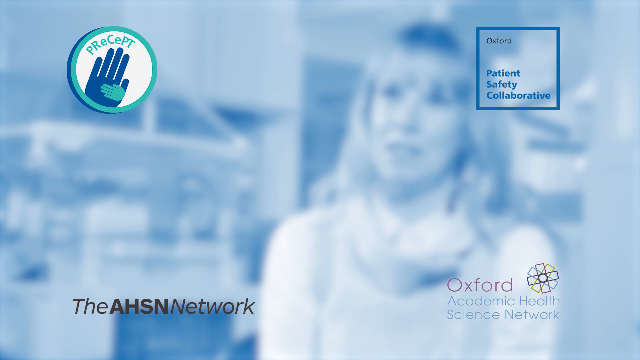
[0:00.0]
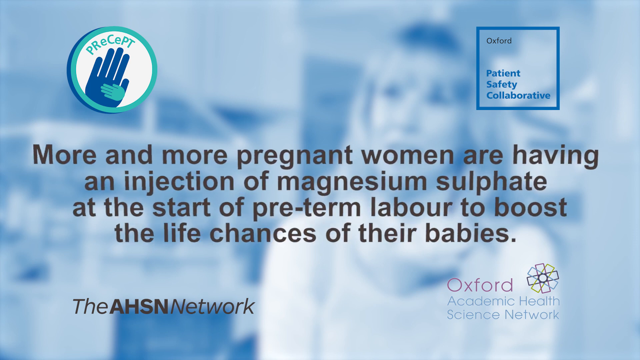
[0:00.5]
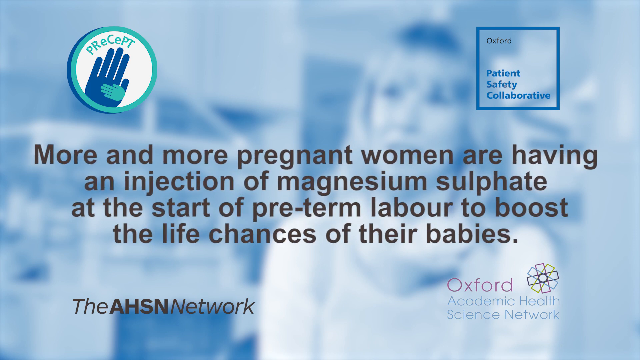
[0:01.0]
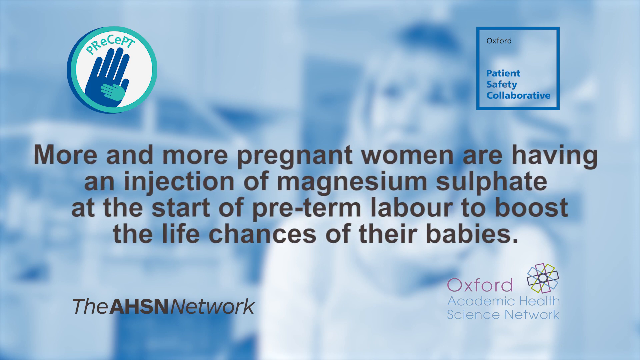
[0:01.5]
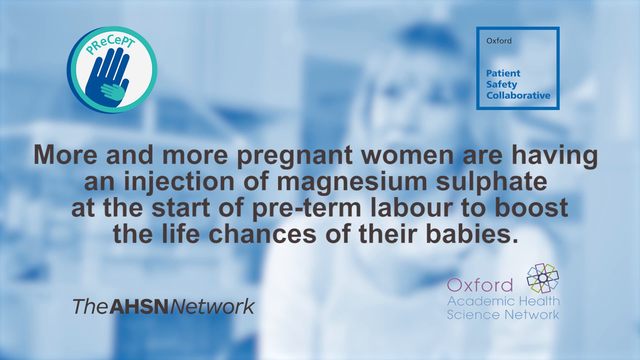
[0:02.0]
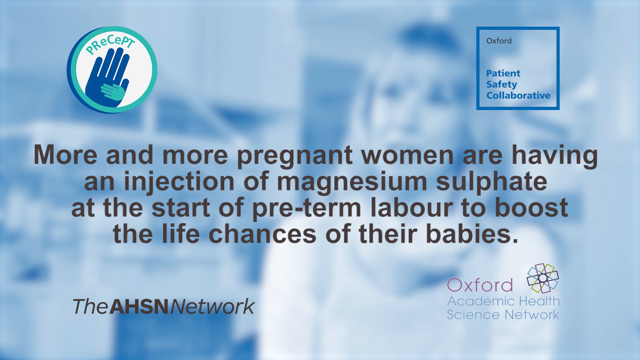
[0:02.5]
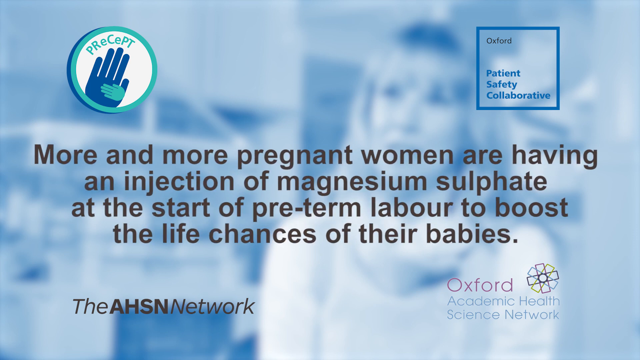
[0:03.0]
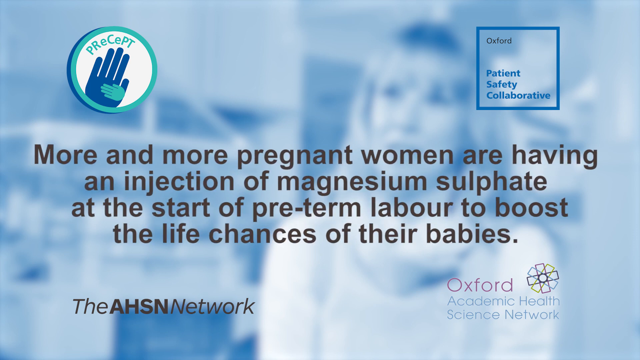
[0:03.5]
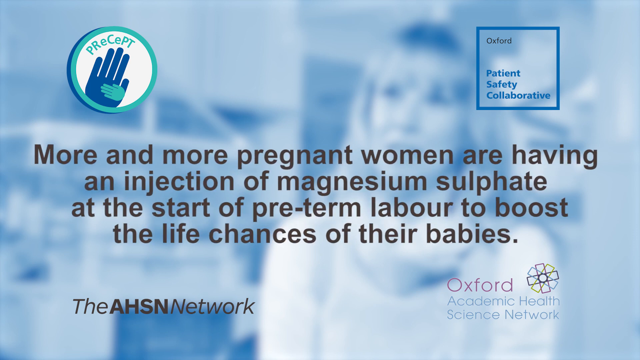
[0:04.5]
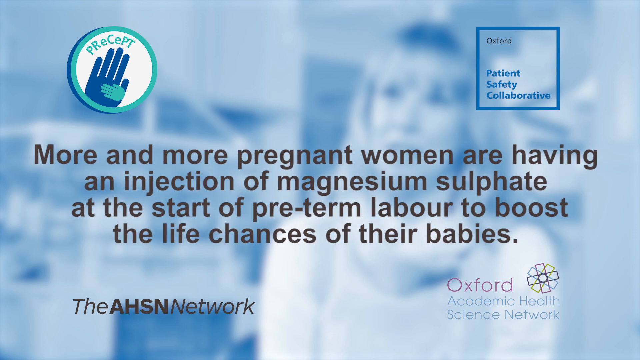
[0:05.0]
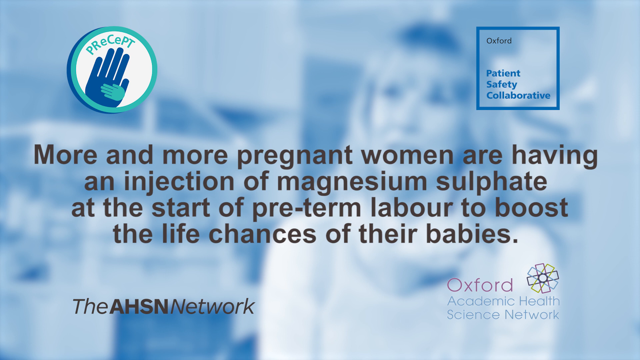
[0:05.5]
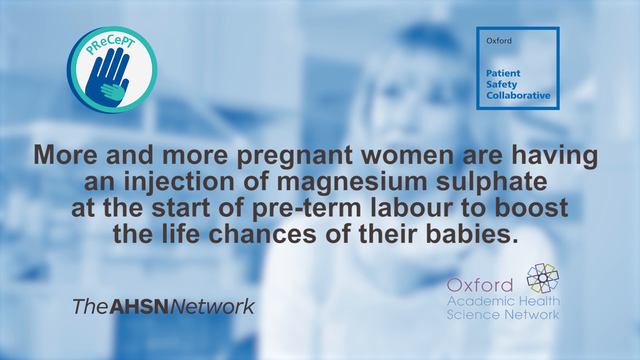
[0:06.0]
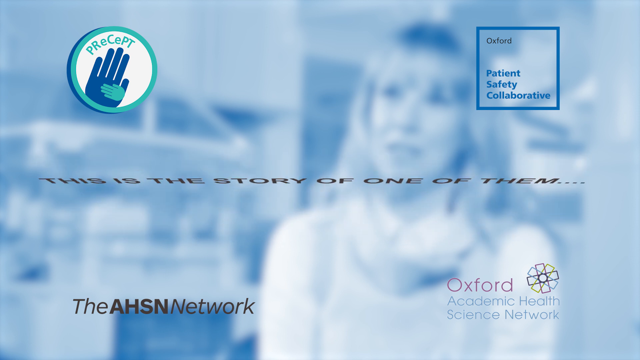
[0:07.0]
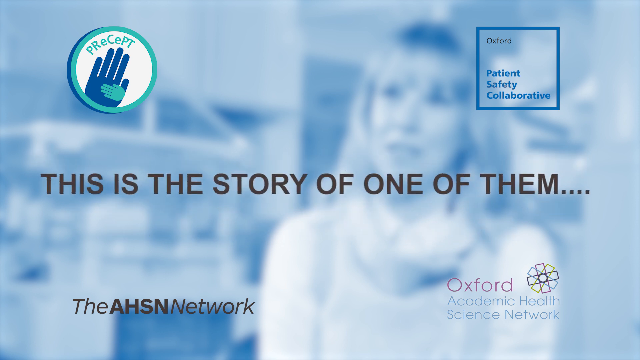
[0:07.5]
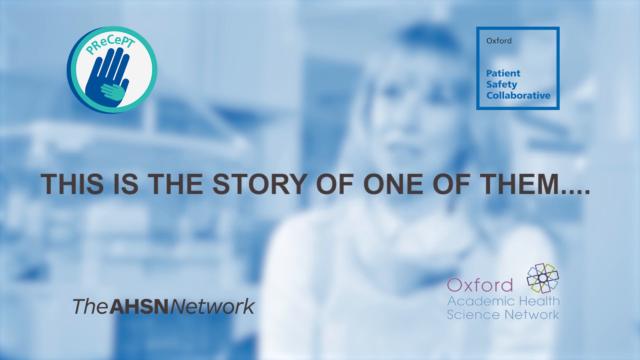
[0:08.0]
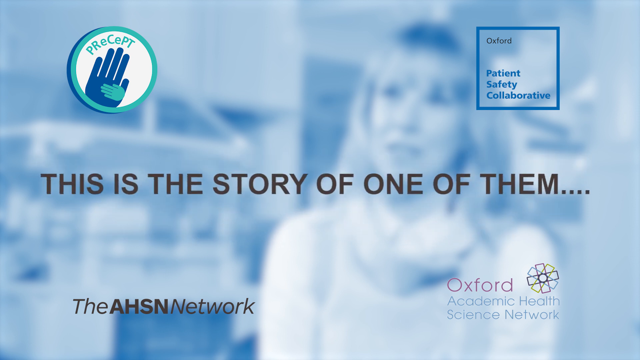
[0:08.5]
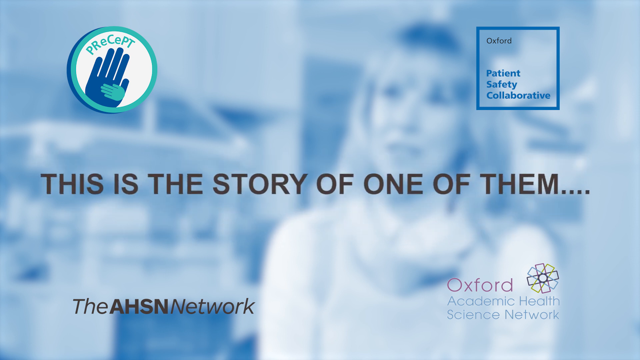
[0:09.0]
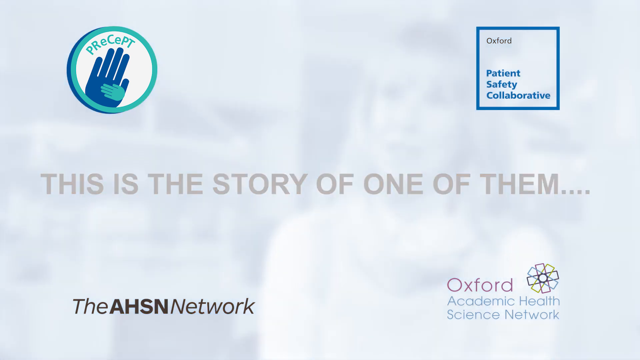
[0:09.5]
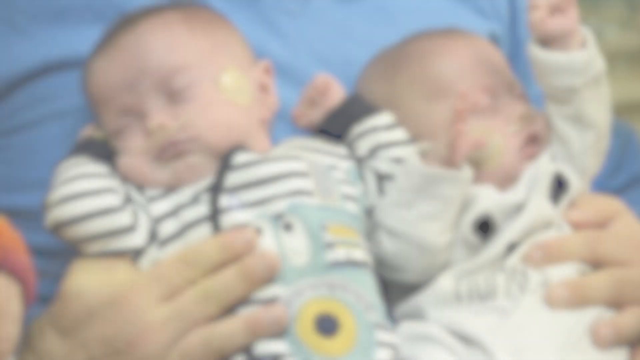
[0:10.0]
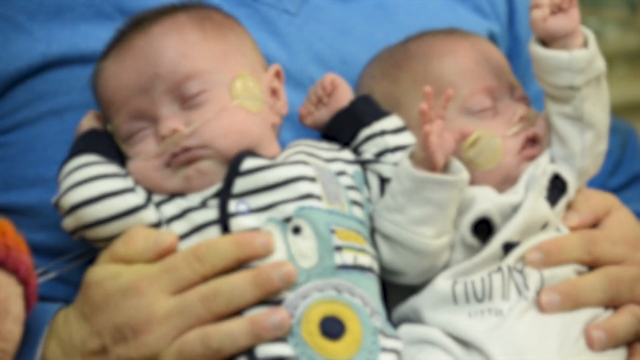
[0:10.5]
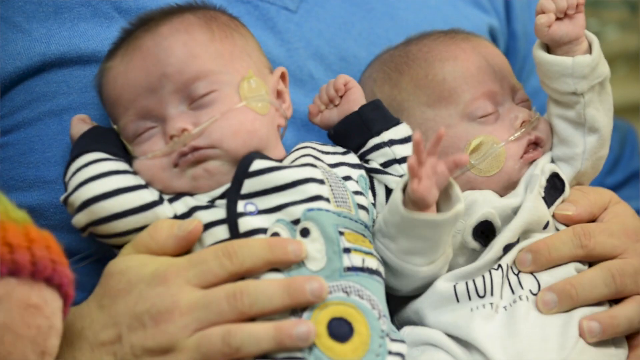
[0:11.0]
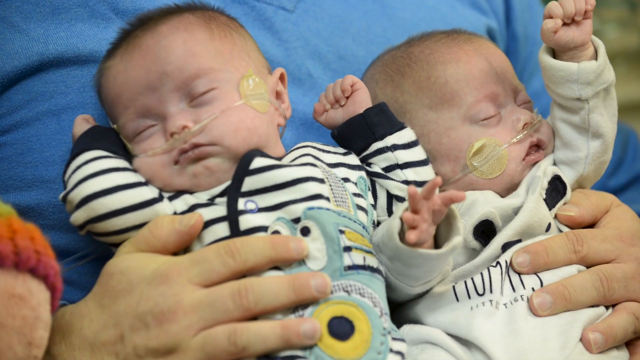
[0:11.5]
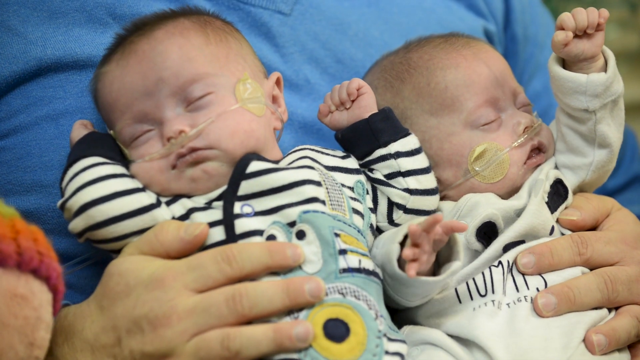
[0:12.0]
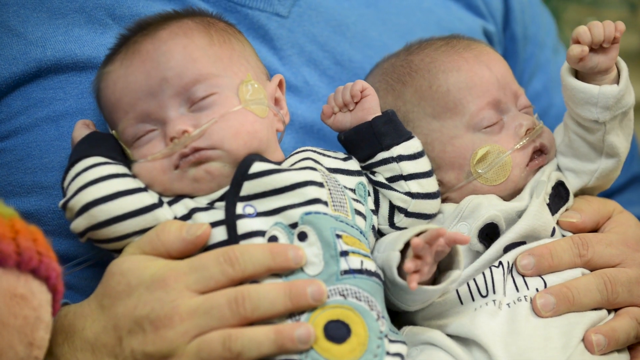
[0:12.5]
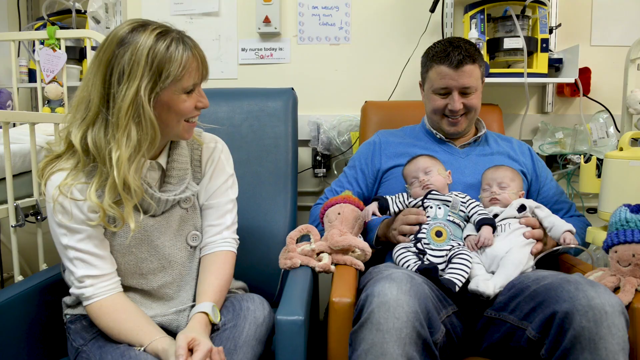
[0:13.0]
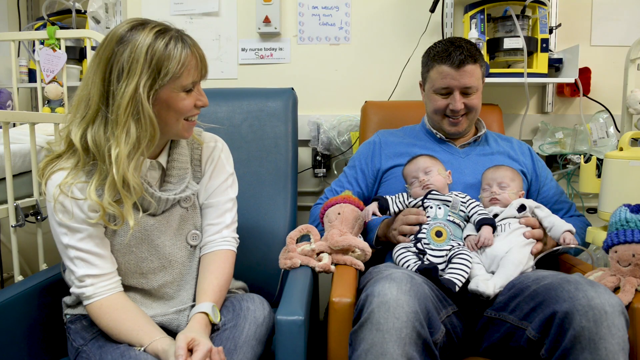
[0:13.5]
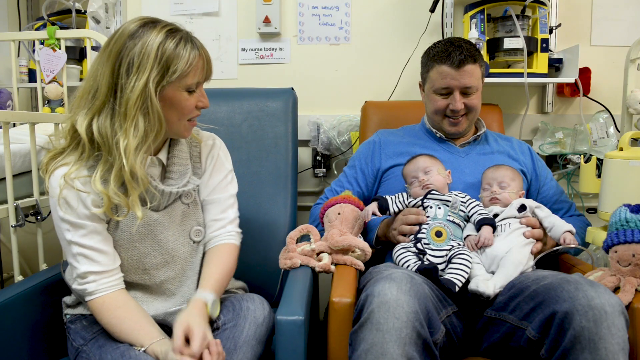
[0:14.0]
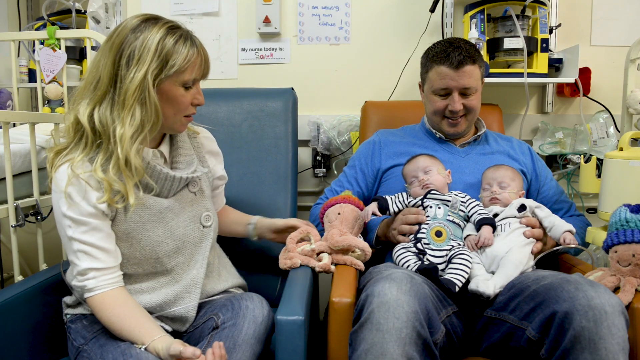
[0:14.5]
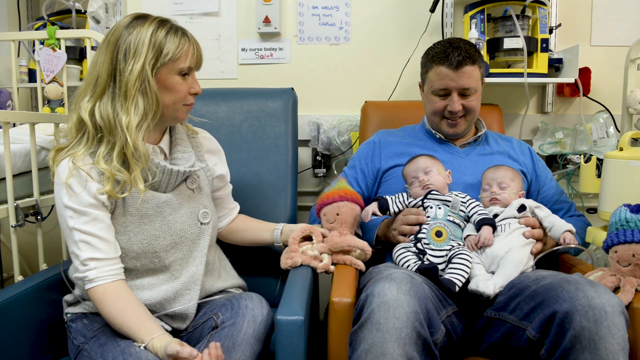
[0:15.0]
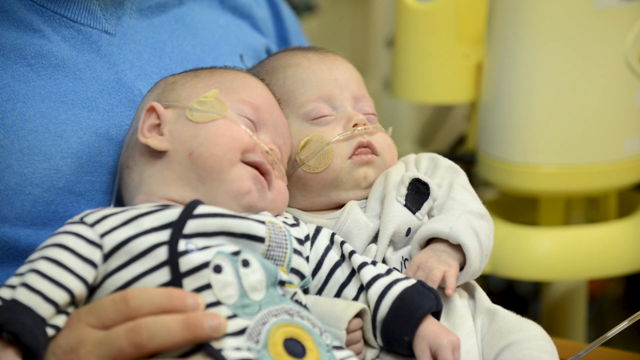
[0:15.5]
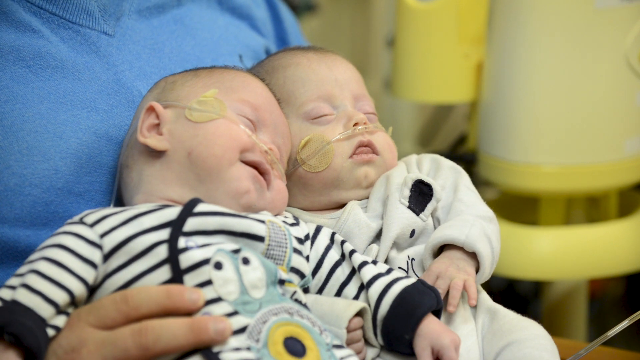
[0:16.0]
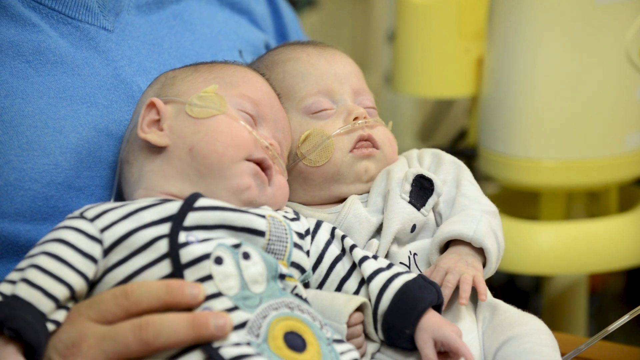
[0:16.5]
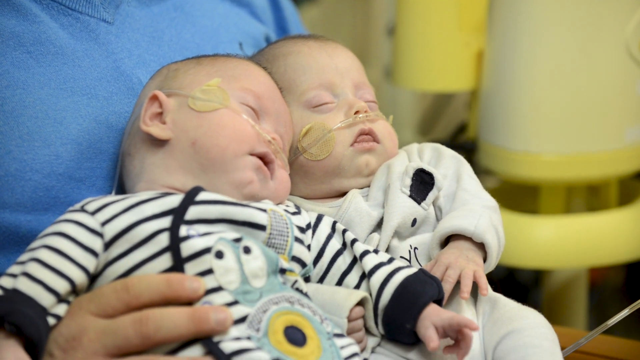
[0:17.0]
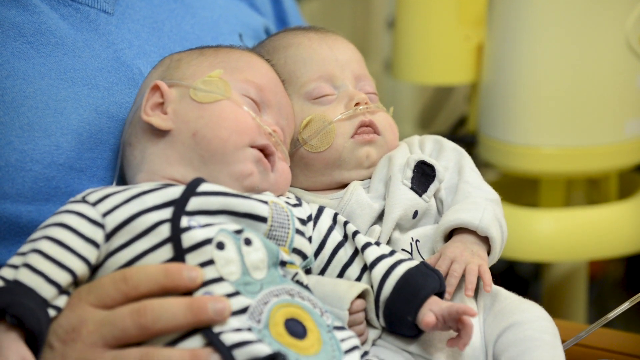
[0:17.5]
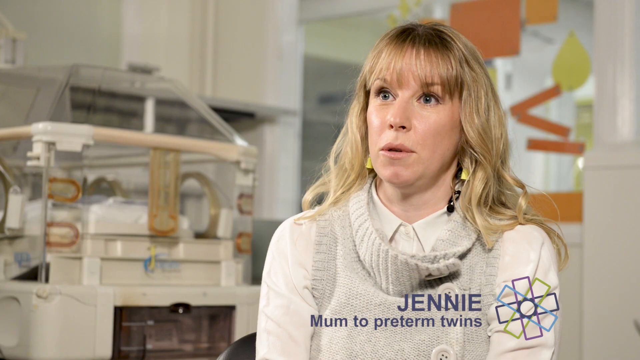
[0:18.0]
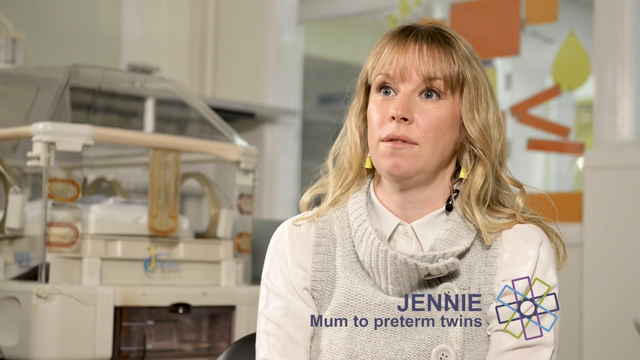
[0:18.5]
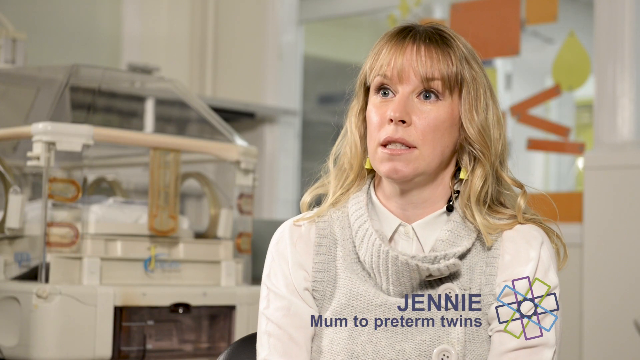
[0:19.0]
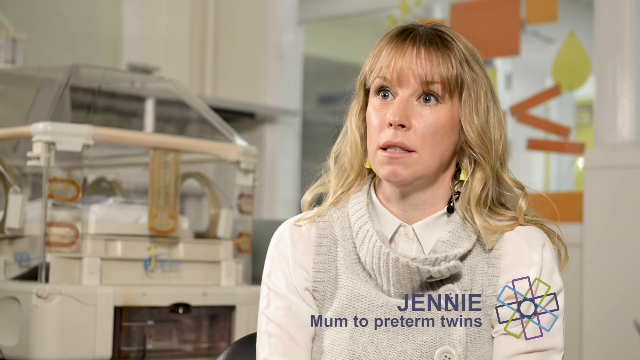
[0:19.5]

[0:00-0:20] Against a pale blue background, a woman who is probably in her 40s or 50s appears in the background. She has shoulder-length hair, but she cannot be made out very clearly because the background is quite transparent. In the top left is a logo reading "PRECEPT"; the logo is a large dark blue hand with a very small pale blue hand on top of it that just fits in the palm, with a blue outline. In the top right corner it says "Oxford Patient Safety Collaborative". Grey text underneath takes up the majority of the screen and reads "more and more pregnant women are having an injection of magnesium sulfate at the start of preterm labour to boost the life chances of their babies". At the bottom is the logo for Oxford Academic Health Science Network, with the AHSN Network logo in the bottom left. Grey text then reads "this is the story of one of them" before a shot of two newborn twin babies on the lap of their dad.